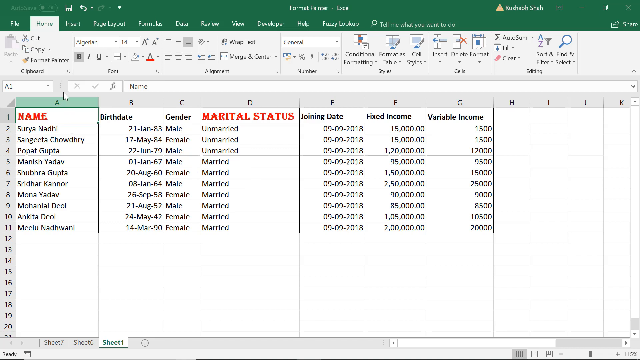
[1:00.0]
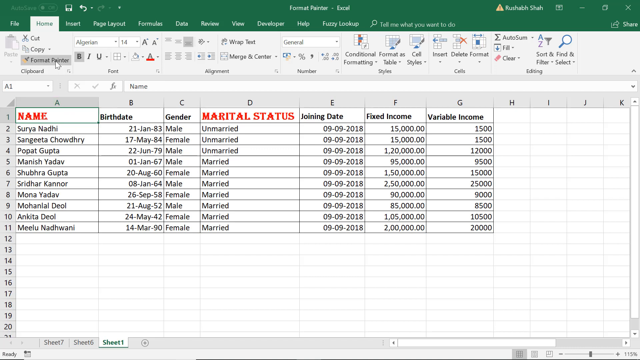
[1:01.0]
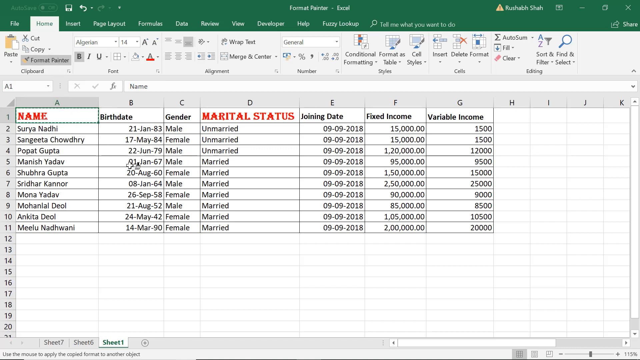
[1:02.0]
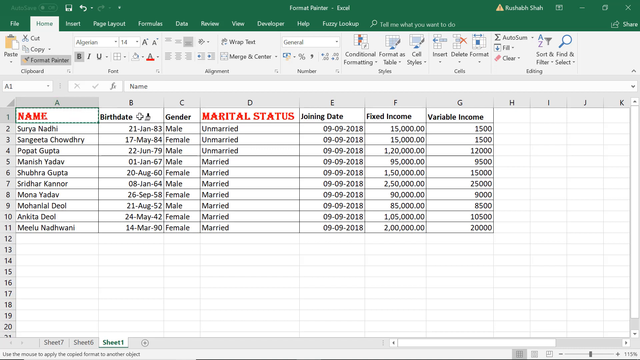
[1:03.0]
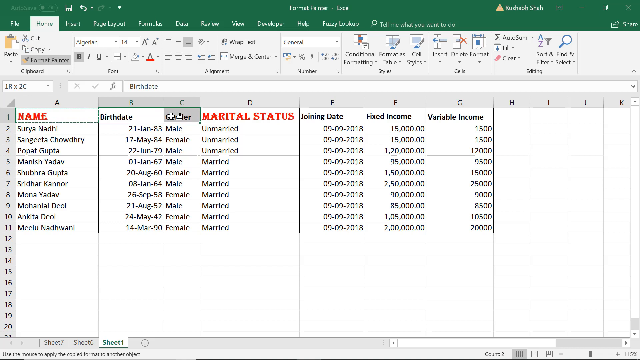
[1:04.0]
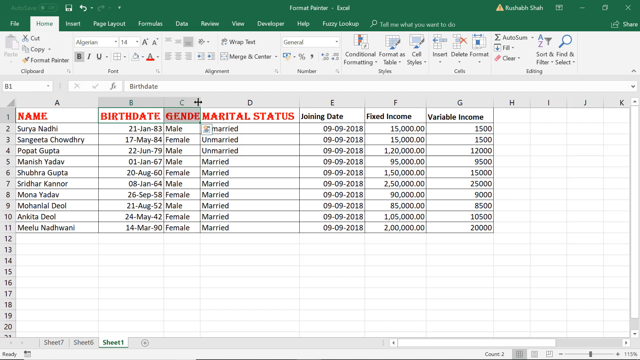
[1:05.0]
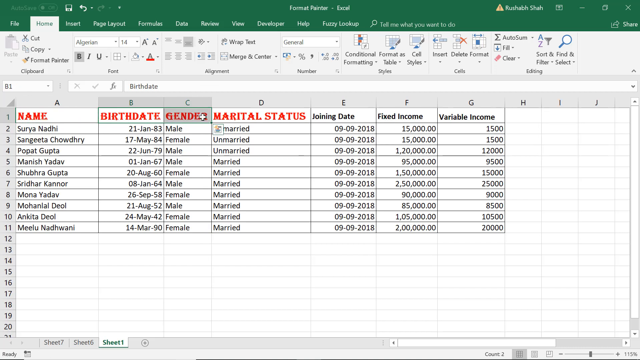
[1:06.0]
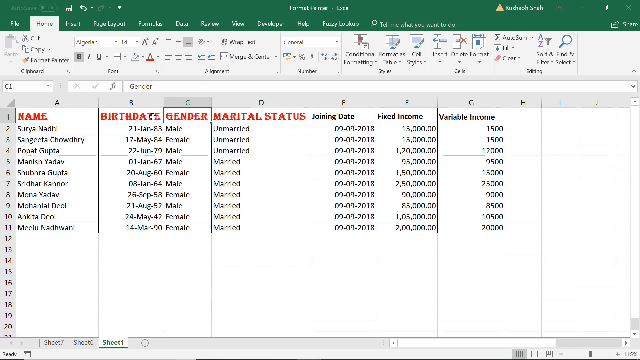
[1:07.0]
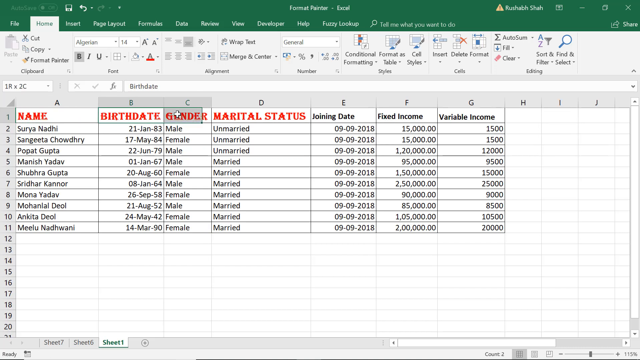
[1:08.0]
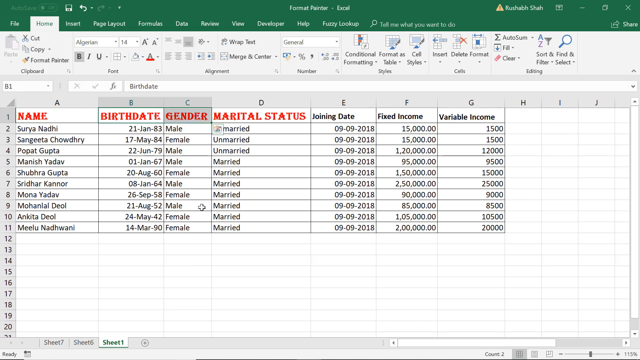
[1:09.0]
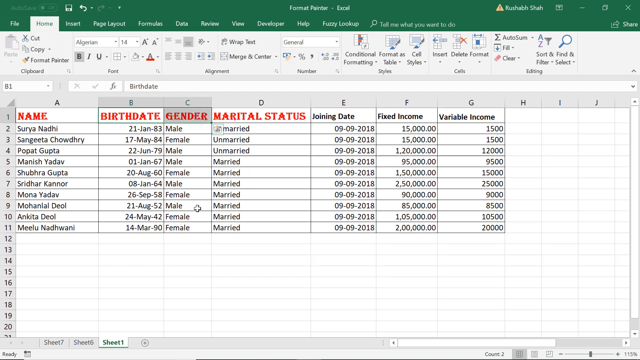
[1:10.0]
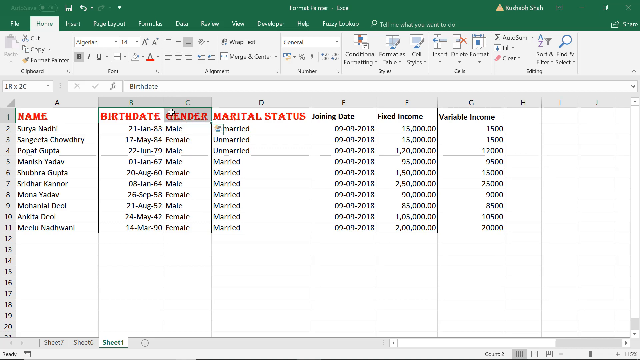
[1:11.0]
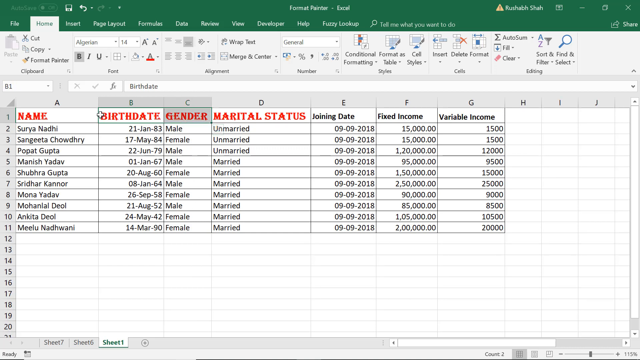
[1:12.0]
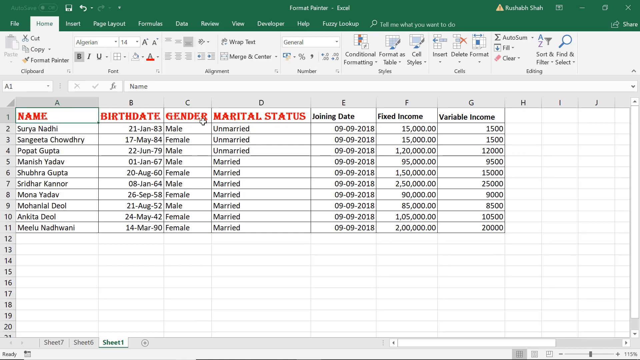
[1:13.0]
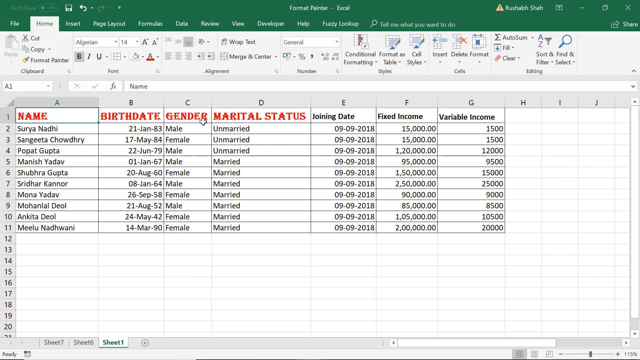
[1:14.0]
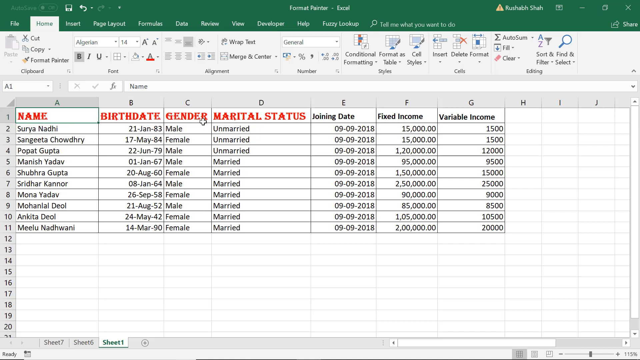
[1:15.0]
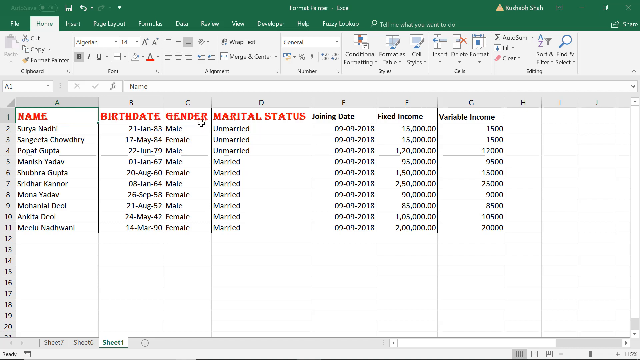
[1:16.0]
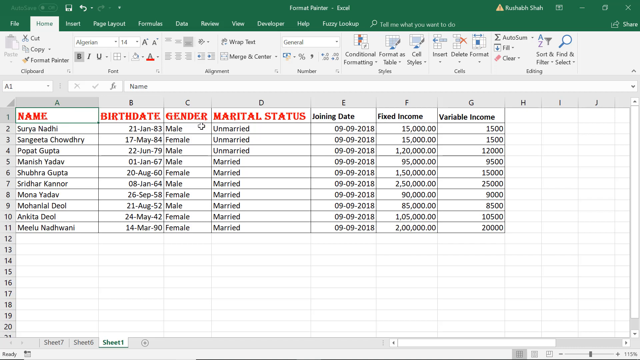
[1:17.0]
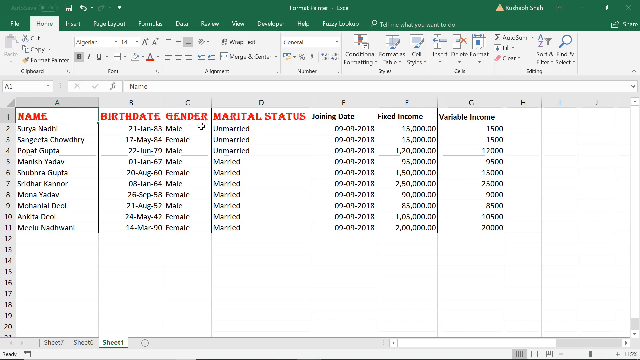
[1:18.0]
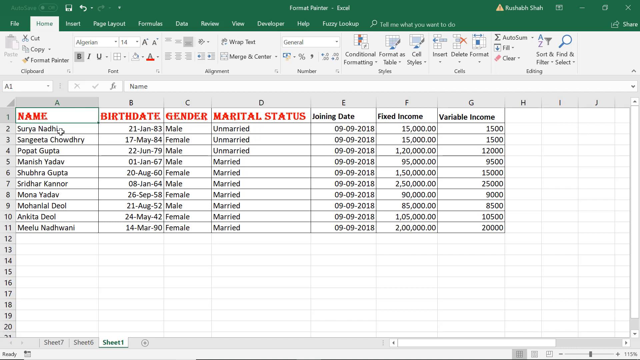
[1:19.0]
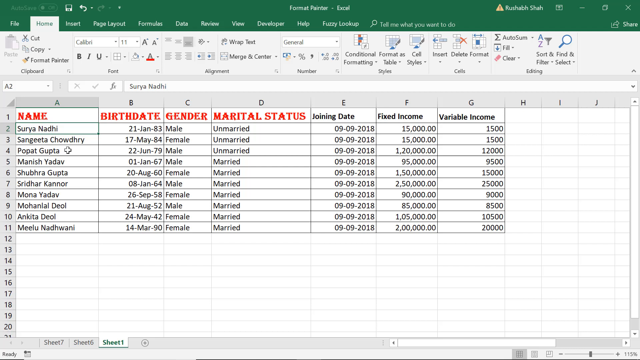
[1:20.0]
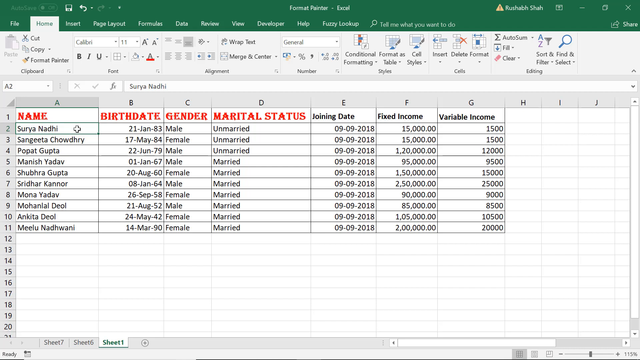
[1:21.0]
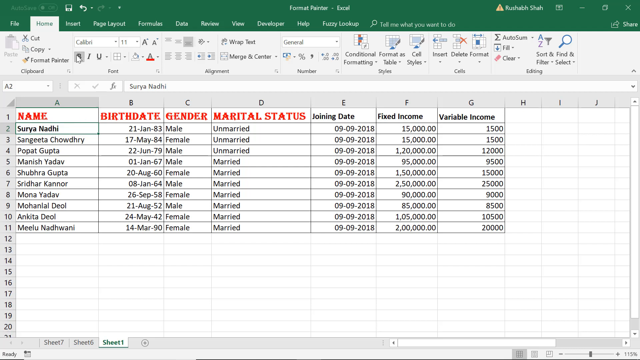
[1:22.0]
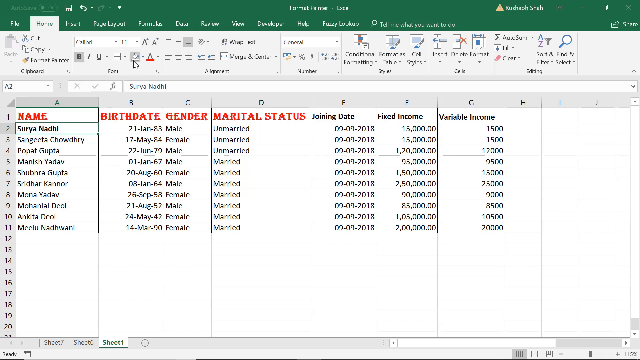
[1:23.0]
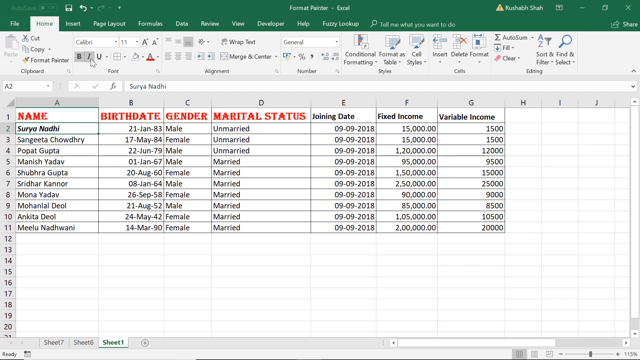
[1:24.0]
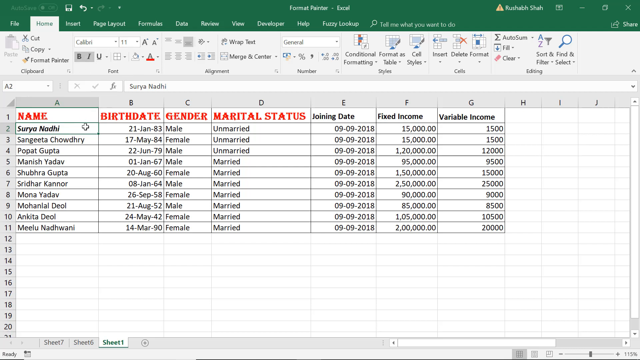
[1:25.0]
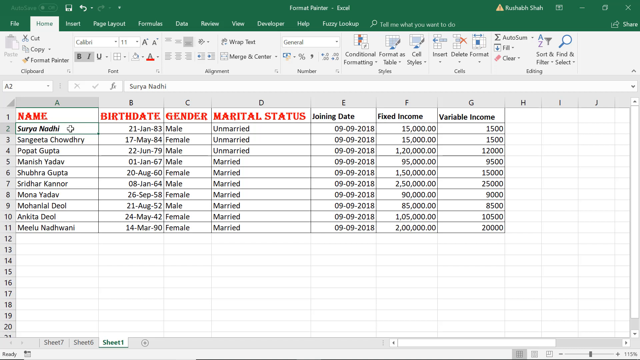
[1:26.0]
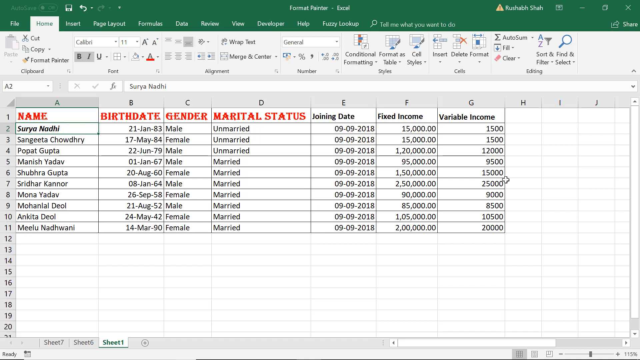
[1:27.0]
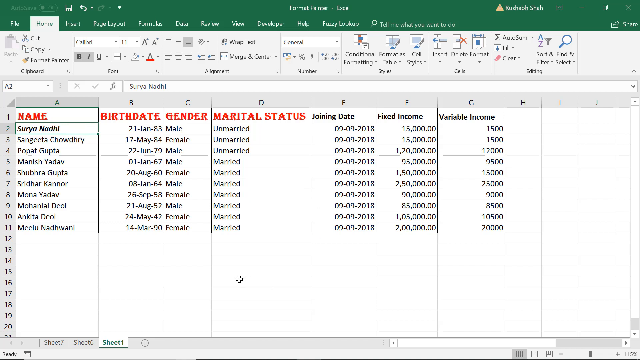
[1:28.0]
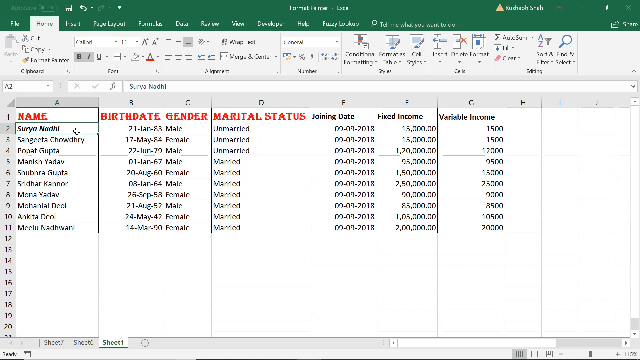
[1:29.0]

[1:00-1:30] Changes to the spreadsheet continue. Columns A, name, and D, marital status, already have the new font style, size and color from the Format Painter tool. The user appears to be clicking into and highlighting the titles of columns B, birth date, and C, gender, and changing them to the same font selected via Format Painter, apparently working toward changing all of the columns.